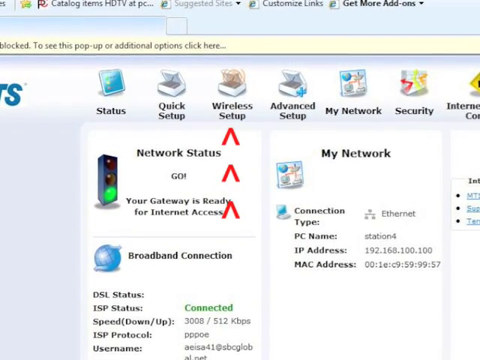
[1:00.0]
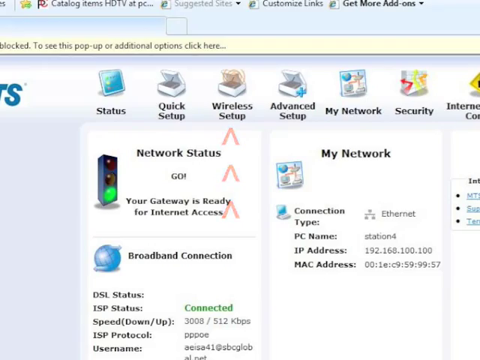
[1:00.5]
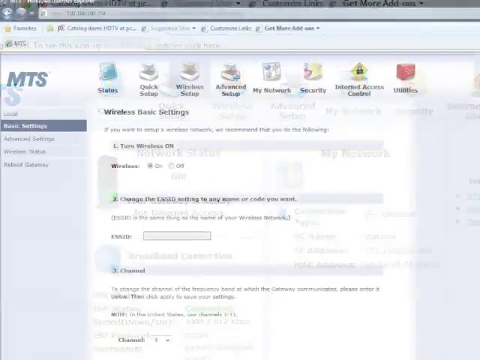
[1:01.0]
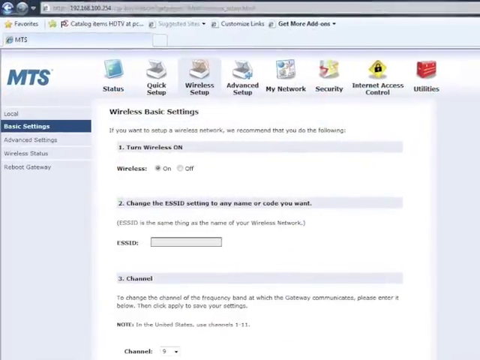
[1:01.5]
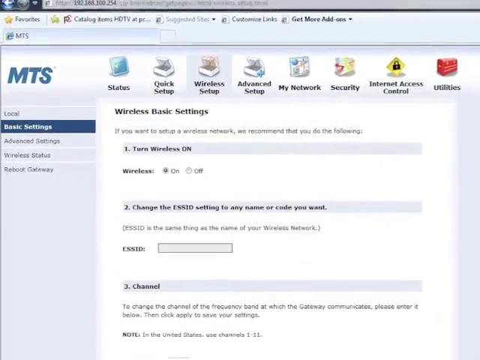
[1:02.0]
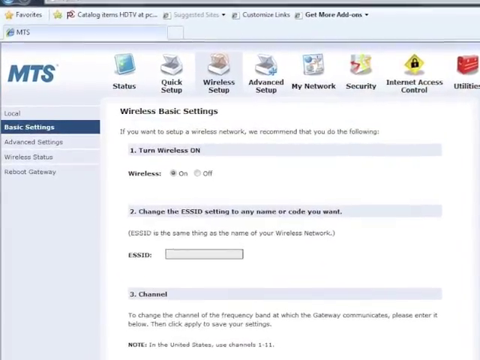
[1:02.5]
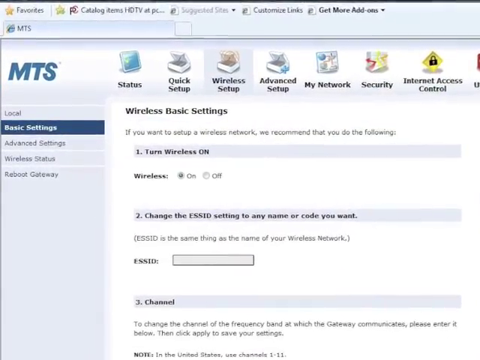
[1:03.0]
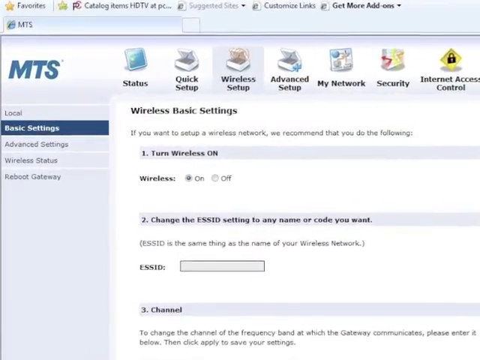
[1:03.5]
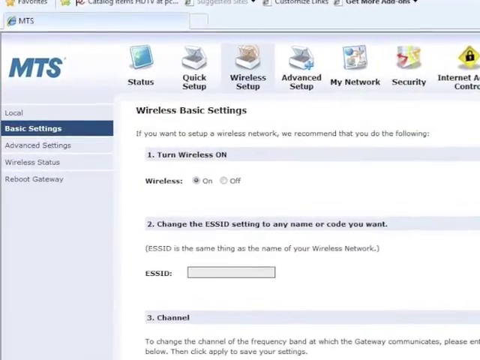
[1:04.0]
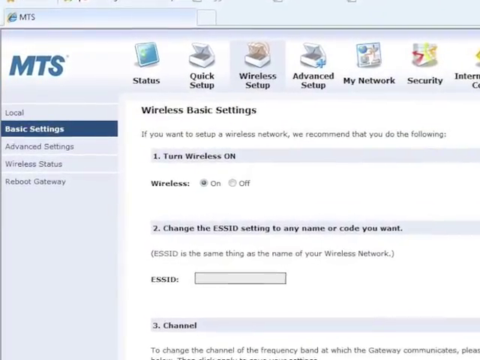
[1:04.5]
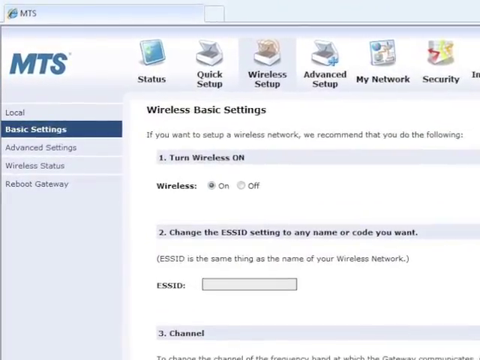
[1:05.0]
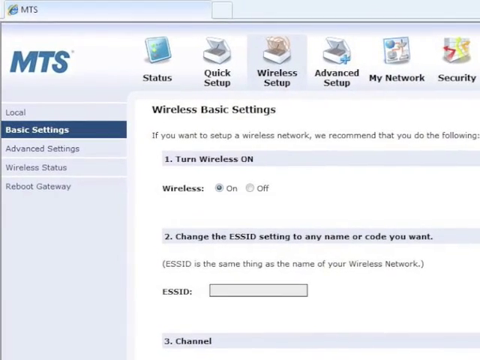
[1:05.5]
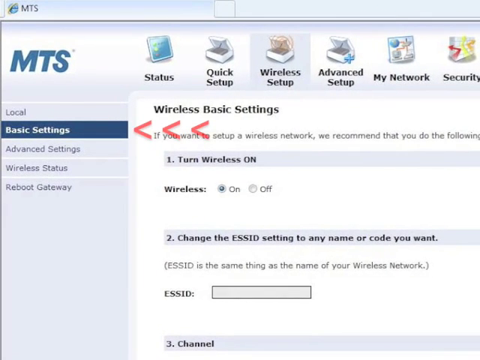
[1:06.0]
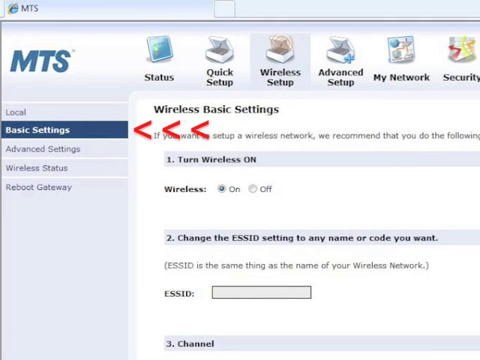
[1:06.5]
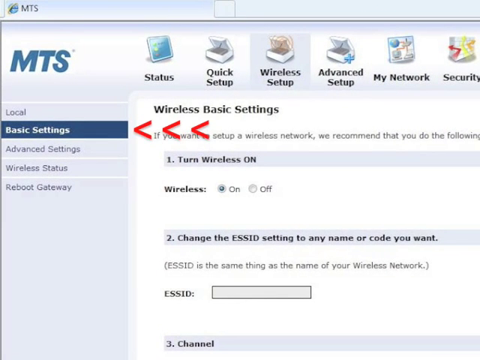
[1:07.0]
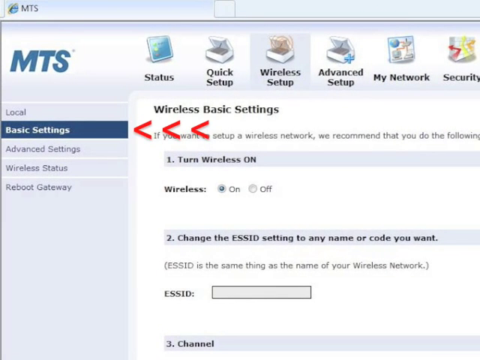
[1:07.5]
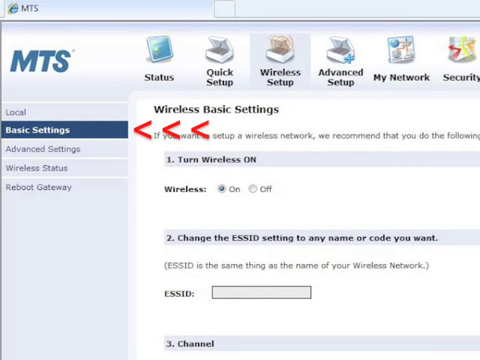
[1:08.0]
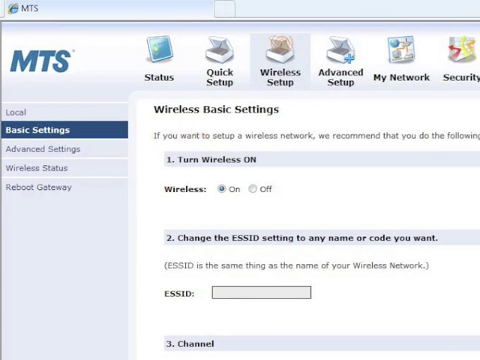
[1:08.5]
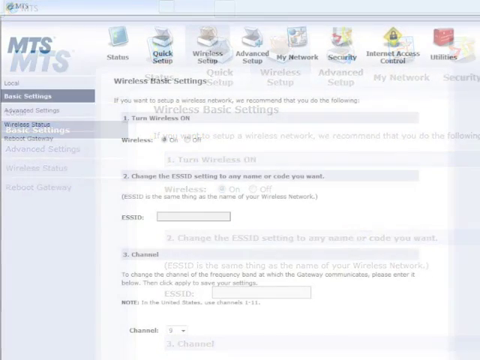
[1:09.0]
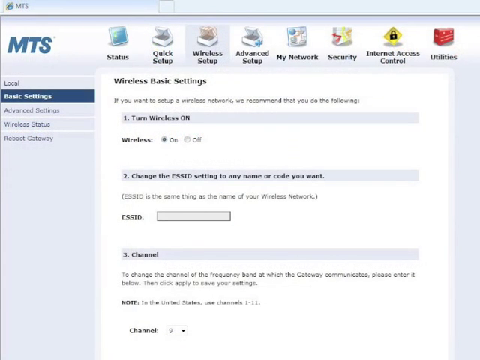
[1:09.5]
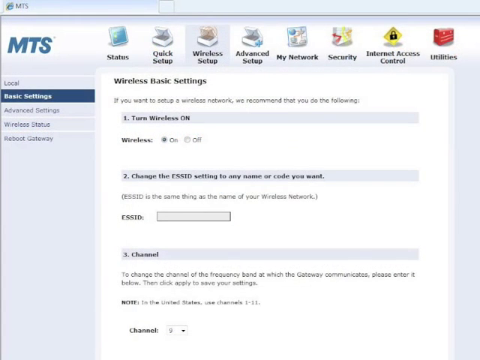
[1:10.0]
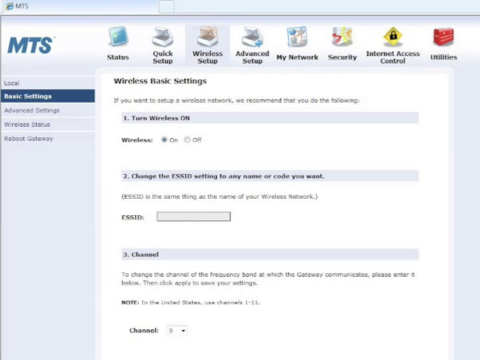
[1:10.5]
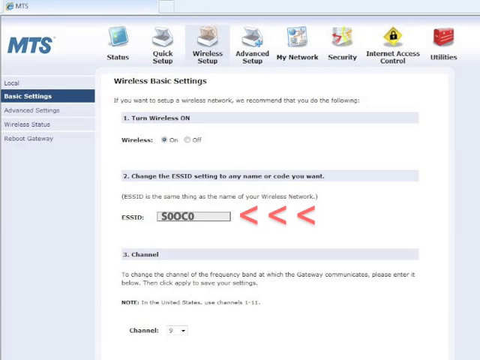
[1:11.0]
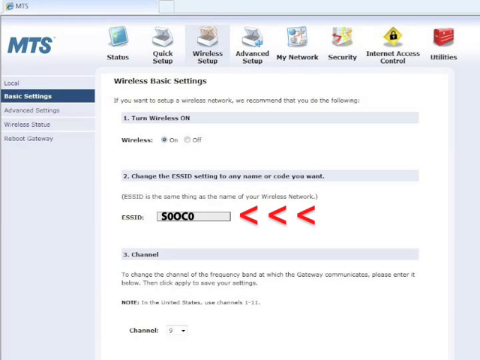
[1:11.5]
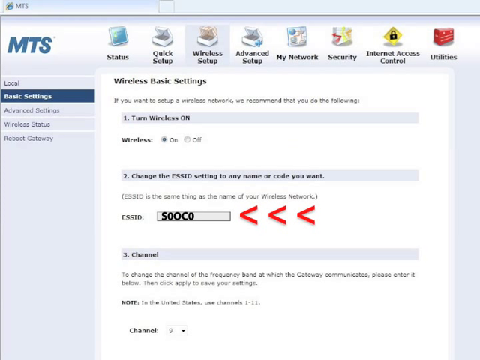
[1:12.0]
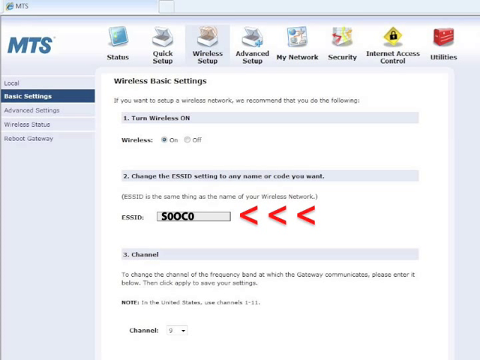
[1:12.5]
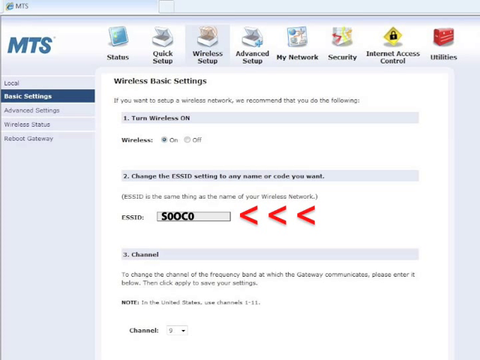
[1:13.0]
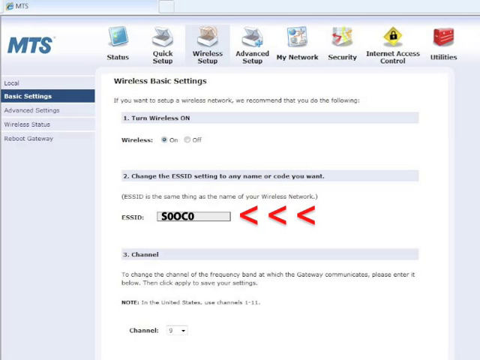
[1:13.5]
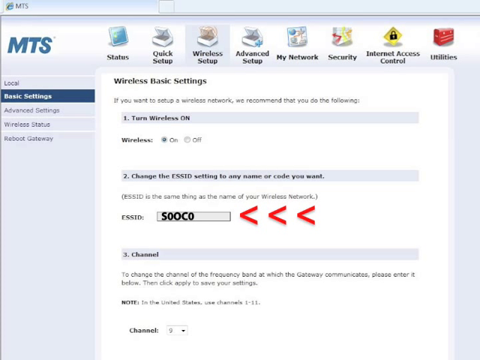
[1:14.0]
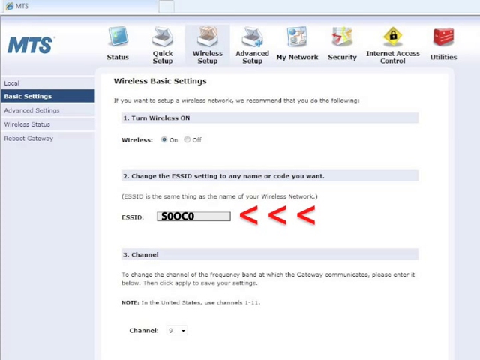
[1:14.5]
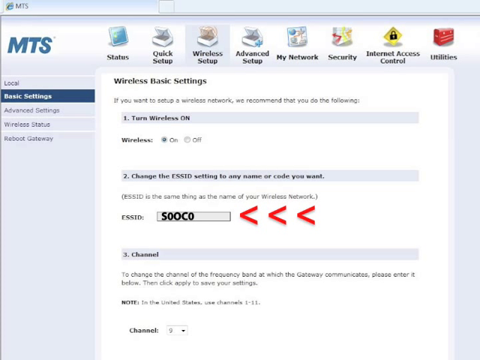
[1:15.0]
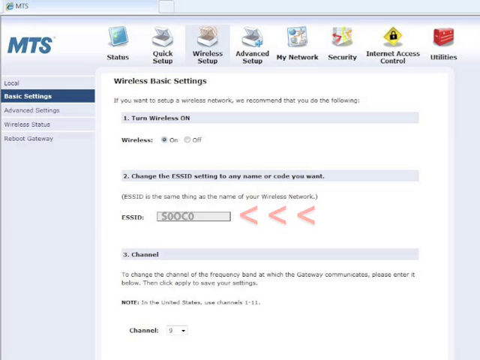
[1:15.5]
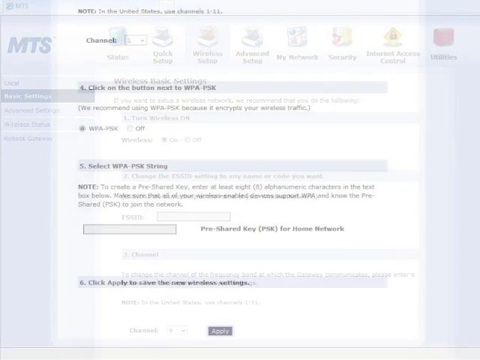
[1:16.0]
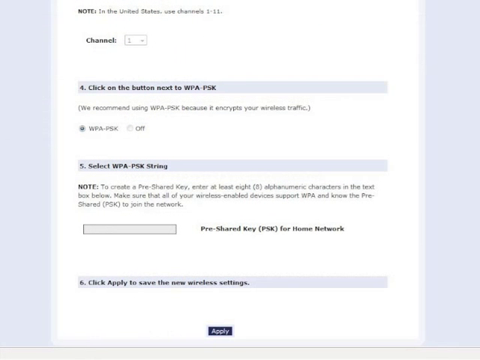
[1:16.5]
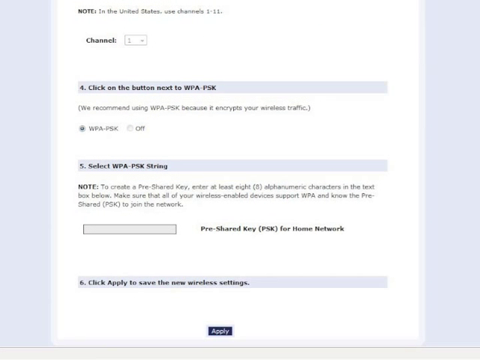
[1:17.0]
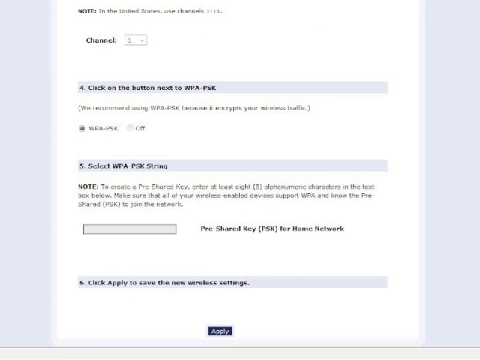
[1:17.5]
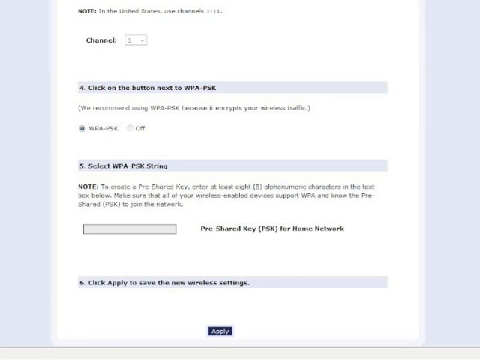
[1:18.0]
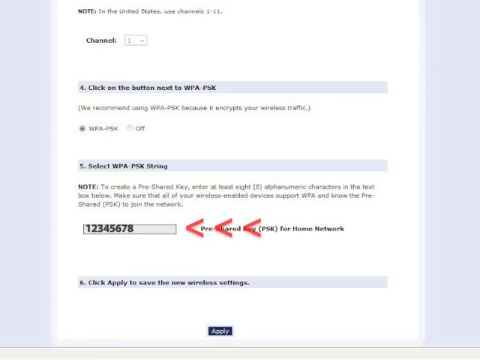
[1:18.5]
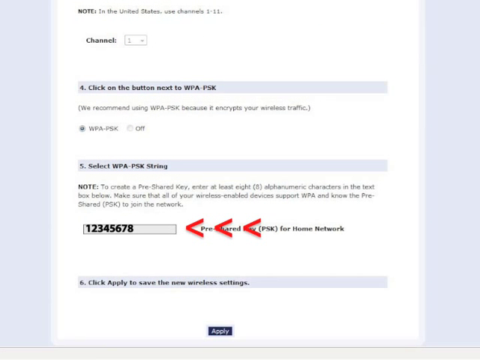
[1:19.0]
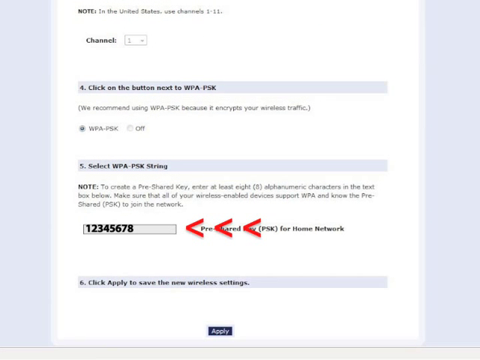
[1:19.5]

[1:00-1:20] A close-up of a tab in an internet browser shows a window with a bunch of network settings, and three arrows point up towards a menu option called "wireless setup." The video then shows the same window with the wireless setup option selected, displaying the wireless basic settings screen. The view zooms and pans in to the left-hand side menu, where three horizontal arrows point leftwards towards the basic settings option. Next, a wider view of the same Wireless Setup page shows three red arrows pointing left towards an input box for ESSID. The video then shows another screen in the settings menu, the Select WPA-PSK string, with an input box containing the numbers 1, 2, 3, 4, 5, 6, 7, 8 and three red arrows pointing to the box.